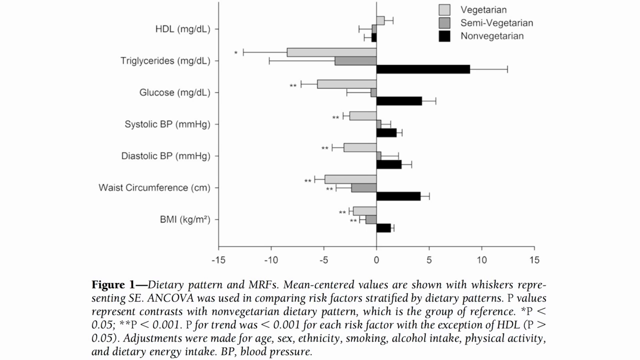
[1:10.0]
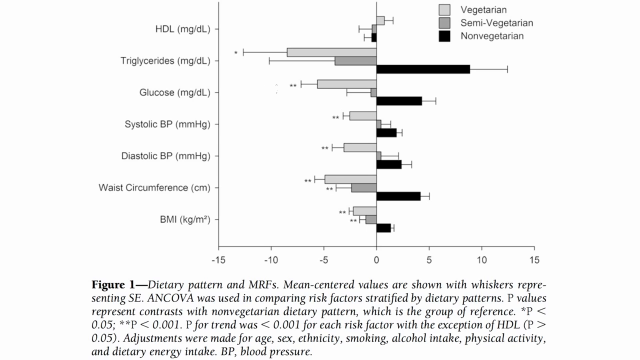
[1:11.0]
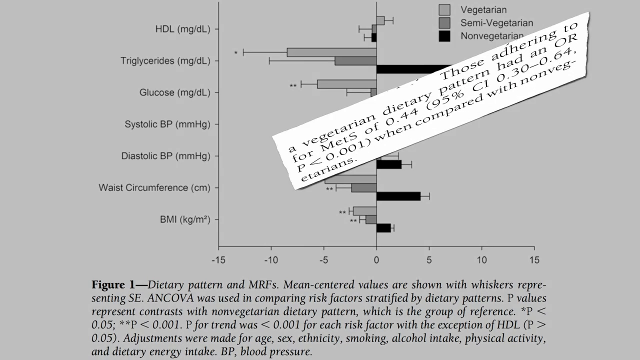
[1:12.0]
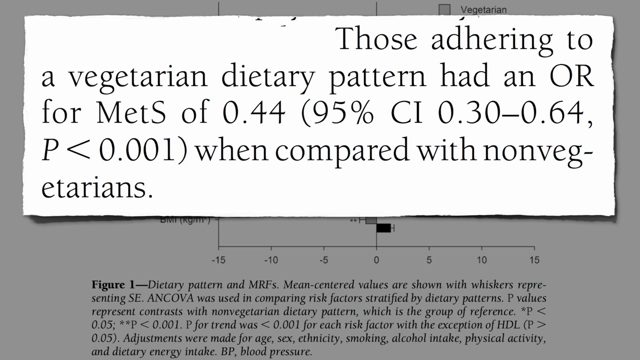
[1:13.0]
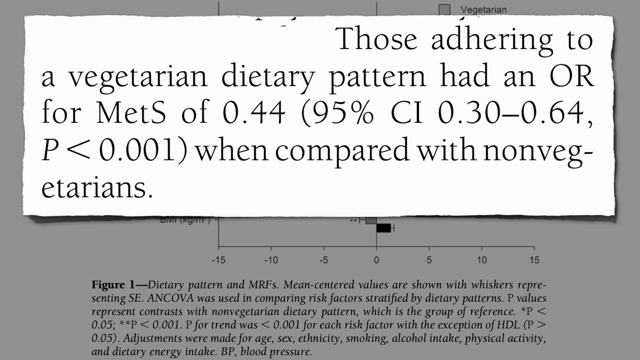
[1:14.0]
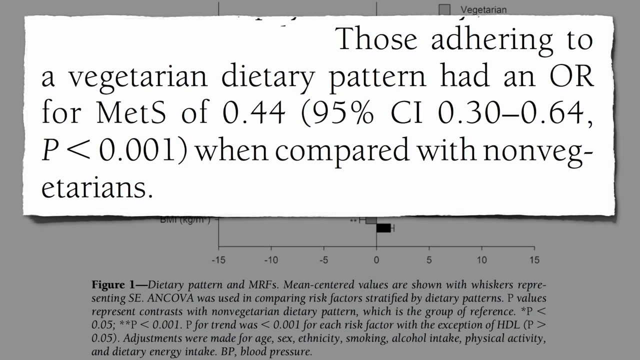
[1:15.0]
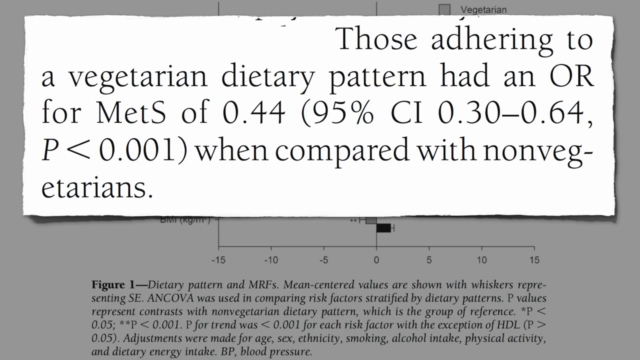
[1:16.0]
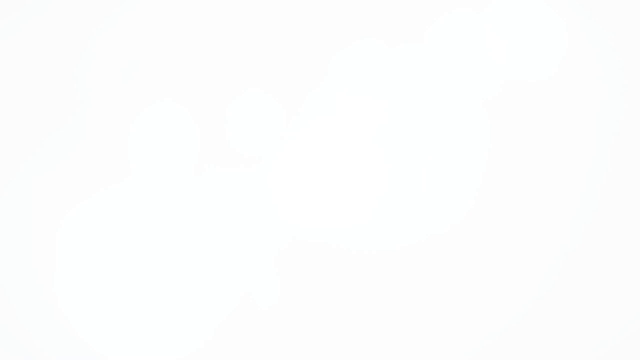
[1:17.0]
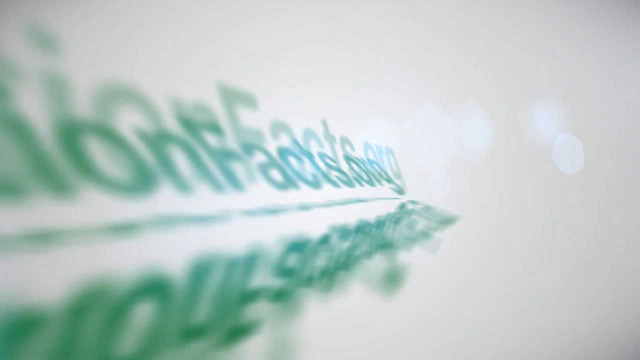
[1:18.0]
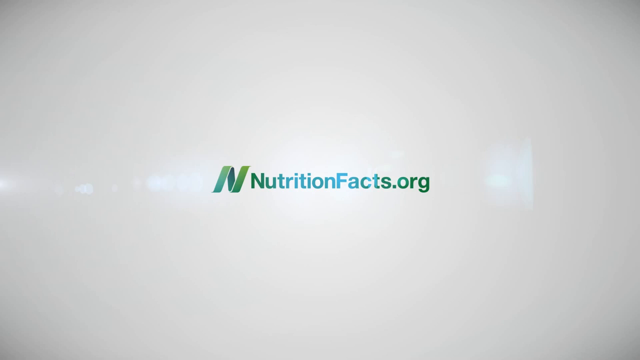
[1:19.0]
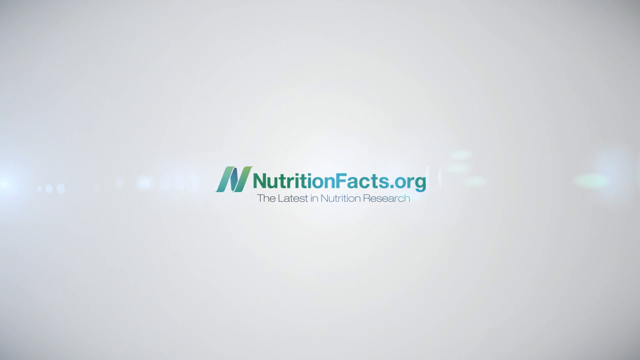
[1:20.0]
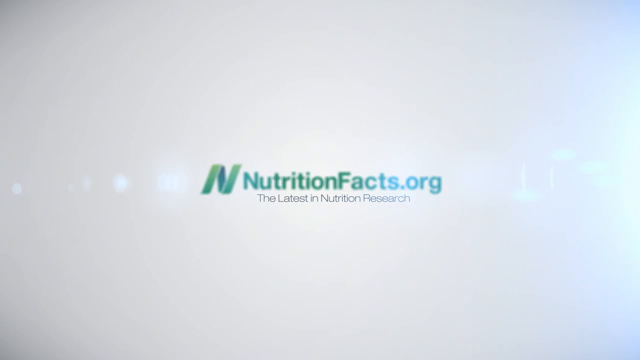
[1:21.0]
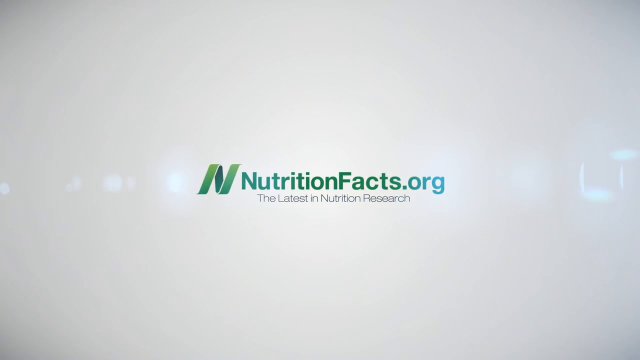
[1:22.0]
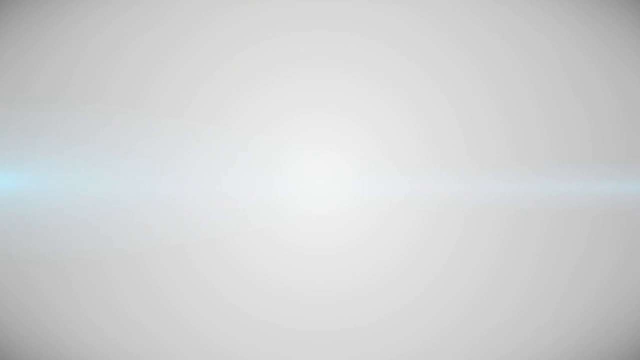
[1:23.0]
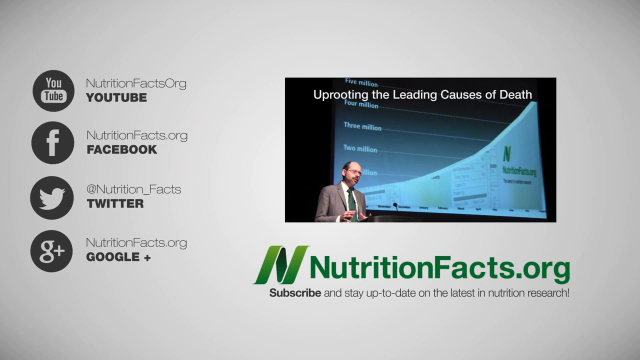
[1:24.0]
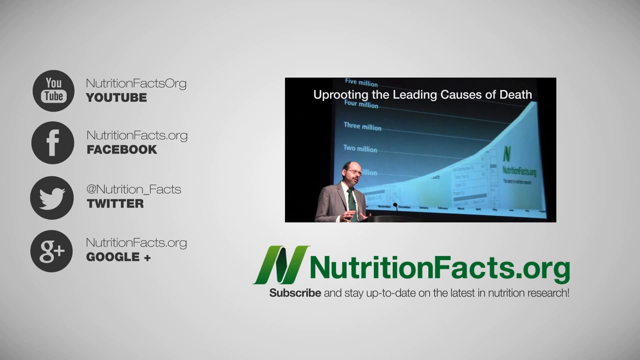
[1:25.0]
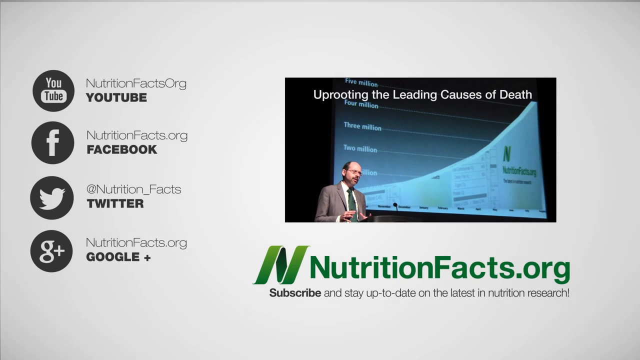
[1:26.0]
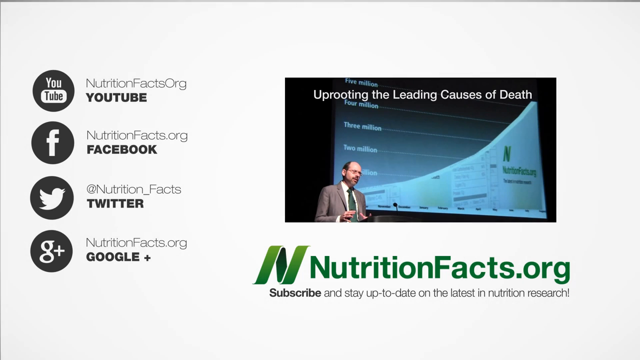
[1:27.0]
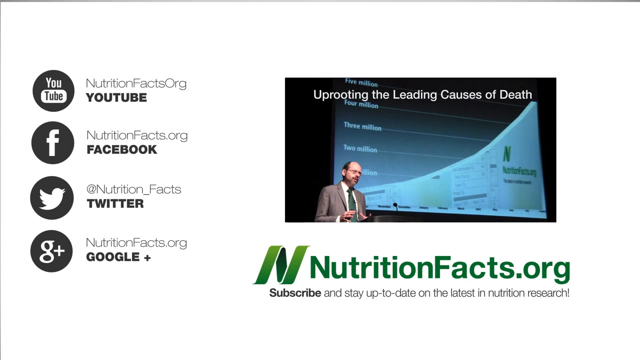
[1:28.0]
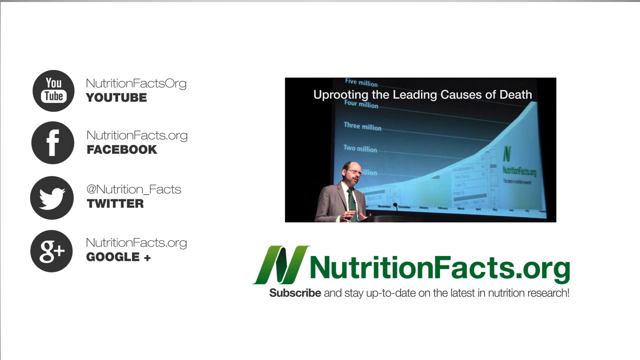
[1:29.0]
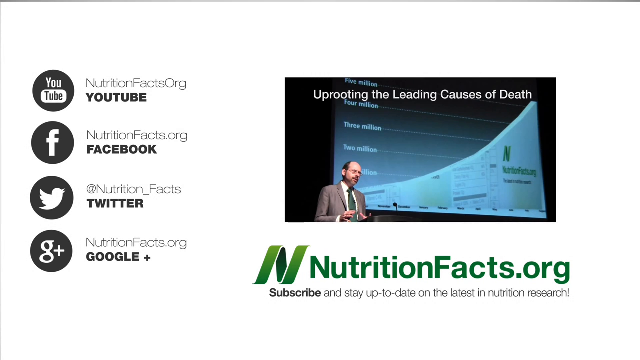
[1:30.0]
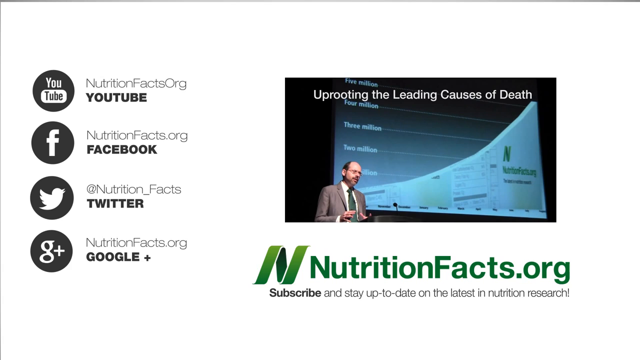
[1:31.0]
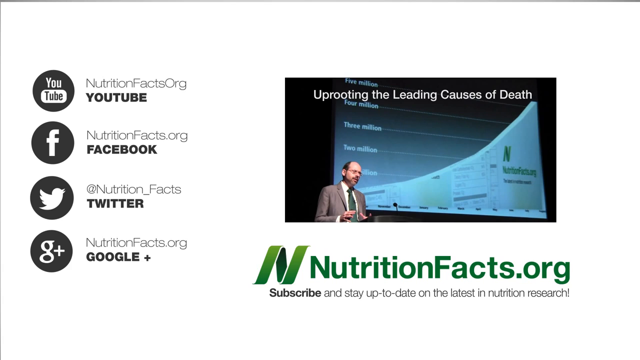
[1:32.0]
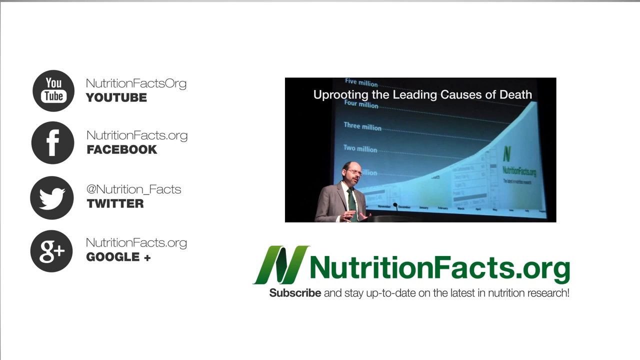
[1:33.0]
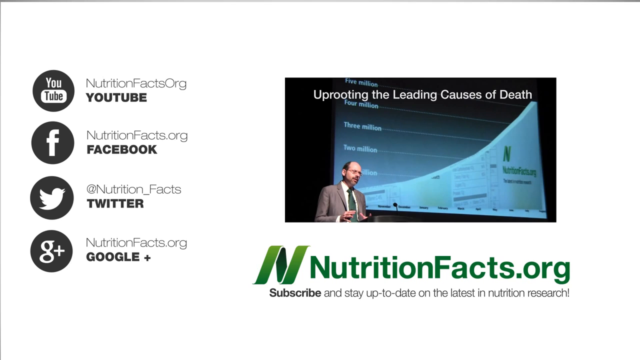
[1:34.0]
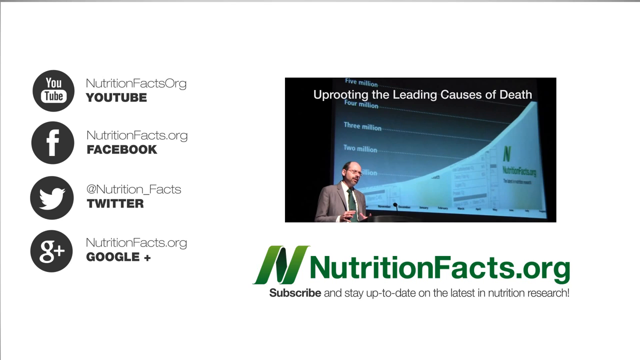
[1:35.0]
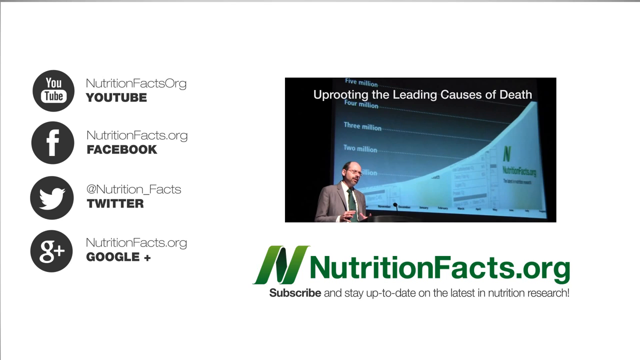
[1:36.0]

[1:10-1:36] Over the existing article with the bar graph, a section of highlighted text moves across in a rectangular white box and settles in the top center of the image, with a slight shadow beneath the box. The text begins to the right of the top center of the article rather than at the far left, and reads "Those adhering to a vegetarian dietary pattern had an OR for MetS of 0.44 (95% CI 0.30-0.64, P<0.001) when compared with nonvegetarians." This slide stays up for a few seconds. The scene then fades into a bright white light, and as in the beginning of the video, bokeh, or soft-focused bright lights, appear in the distance. Text with a mirroring effect, blurred in an abstract way, moves forward in an animated motion to settle in the center of the screen, reading "NutritionFacts.org." The text then flips over as if into a mirror version and spins around until it disappears. The last slide shows an image in a box to the right of center: a man at a podium wearing a gray suit and green tie, with a projection of a graph on a large screen behind him. The image is placed above the logo "Nutritionfacts.org," under which is "subscribe and stay up to date on the latest in nutrition research." To the left, four circles containing black and white social media logos run from top to bottom: YouTube, Facebook, Twitter and Google Plus. Immediately to the right of each circled logo is "NutritionFactsOrg," and beneath each, respectively, in bold black font, are "YOUTUBE," "FACEBOOK," "TWITTER" and "GOOGLE+."